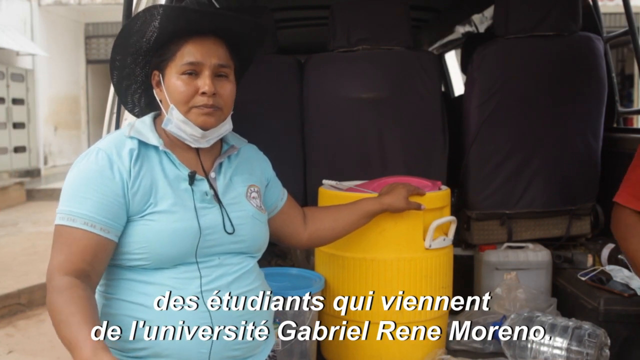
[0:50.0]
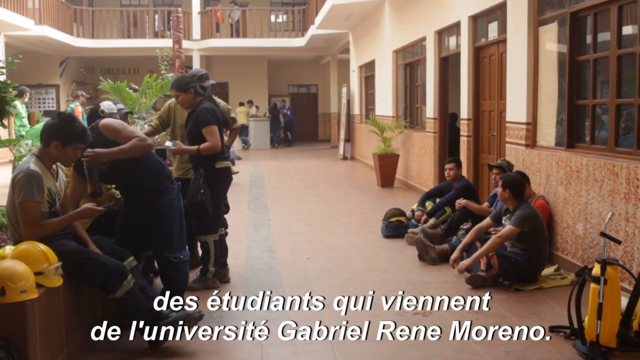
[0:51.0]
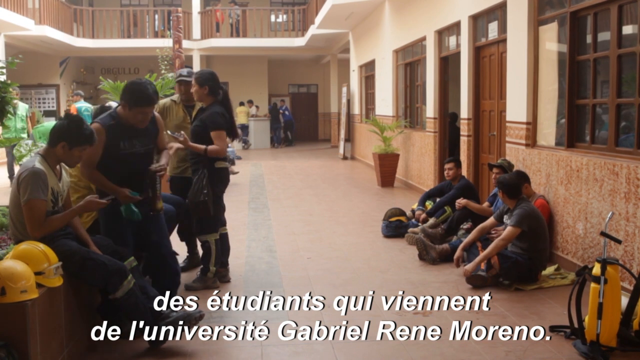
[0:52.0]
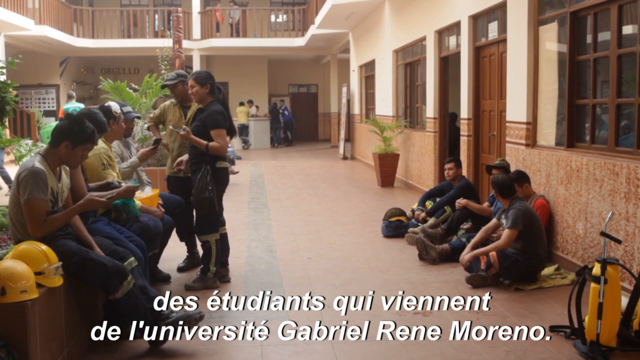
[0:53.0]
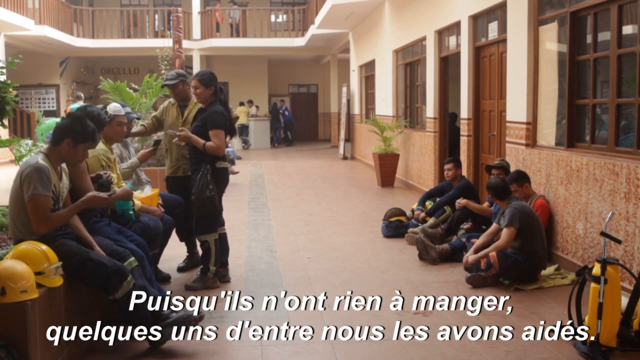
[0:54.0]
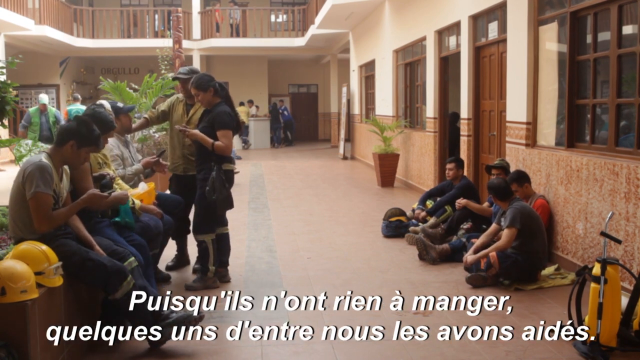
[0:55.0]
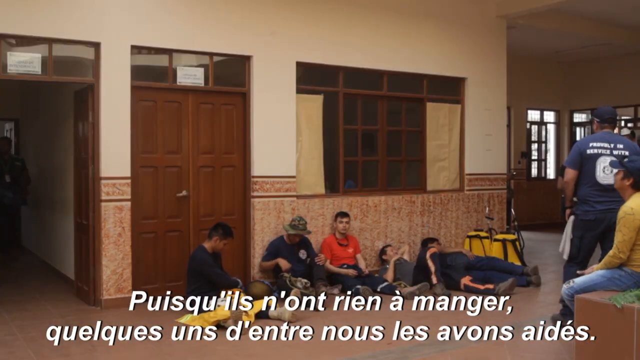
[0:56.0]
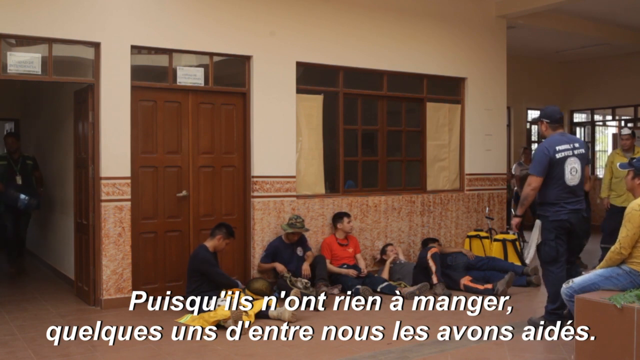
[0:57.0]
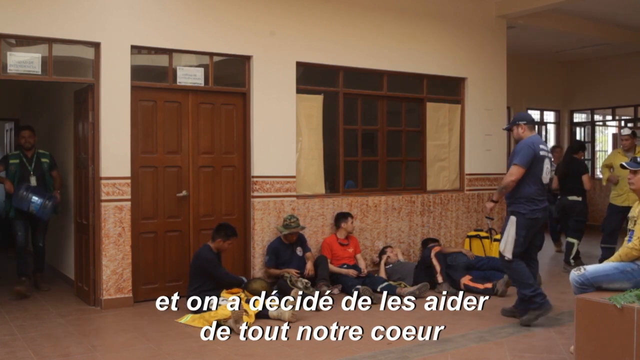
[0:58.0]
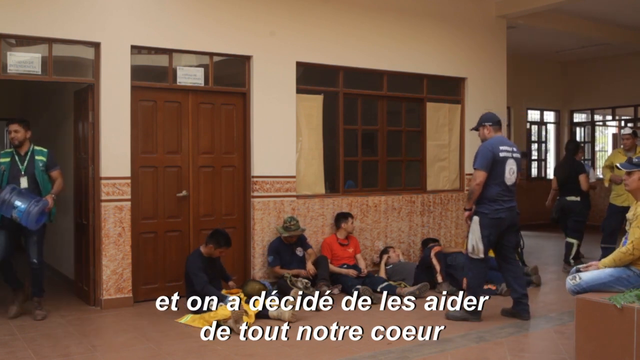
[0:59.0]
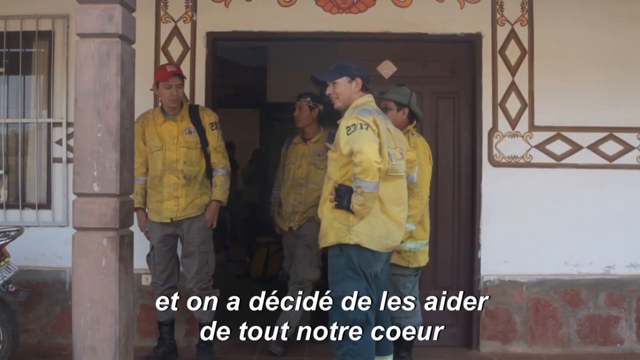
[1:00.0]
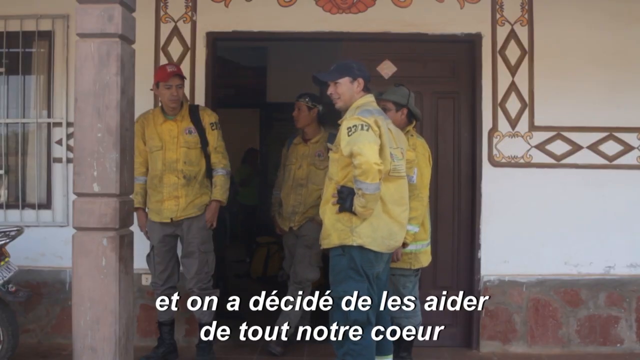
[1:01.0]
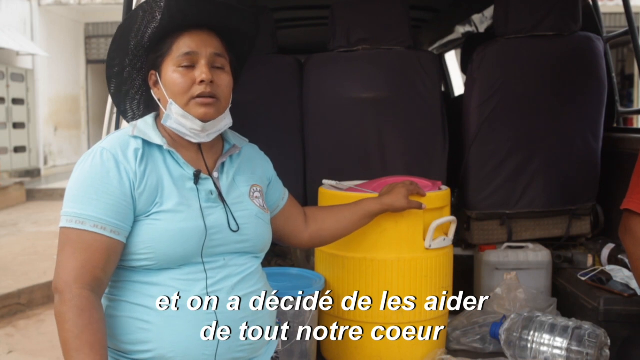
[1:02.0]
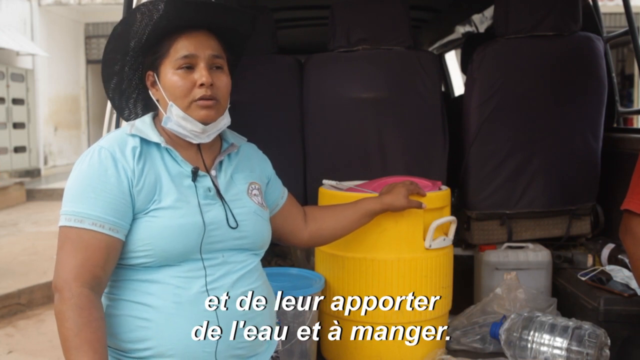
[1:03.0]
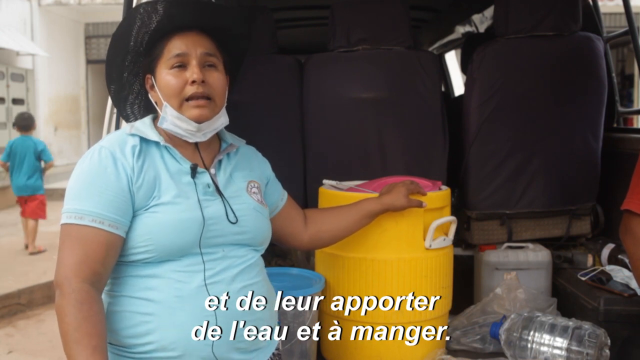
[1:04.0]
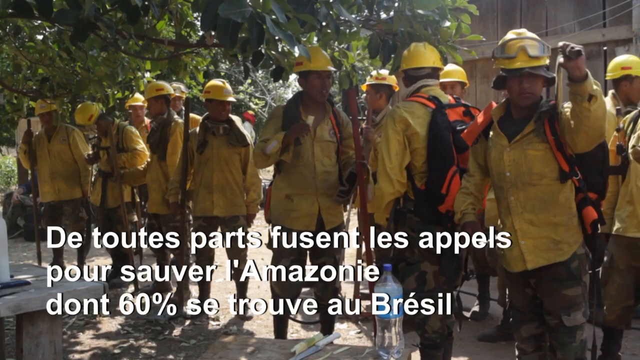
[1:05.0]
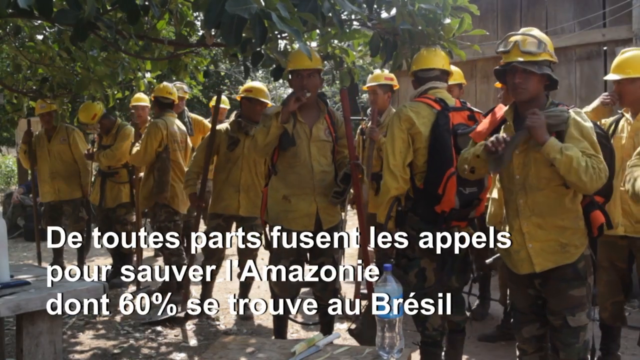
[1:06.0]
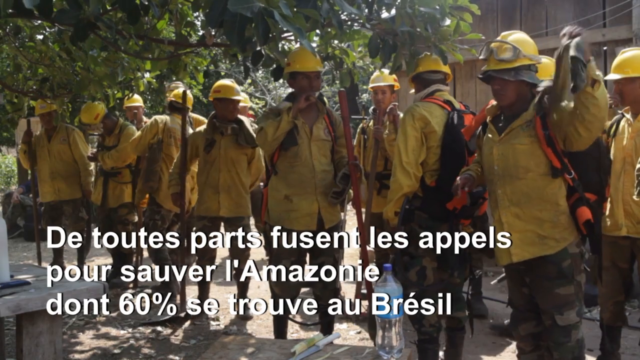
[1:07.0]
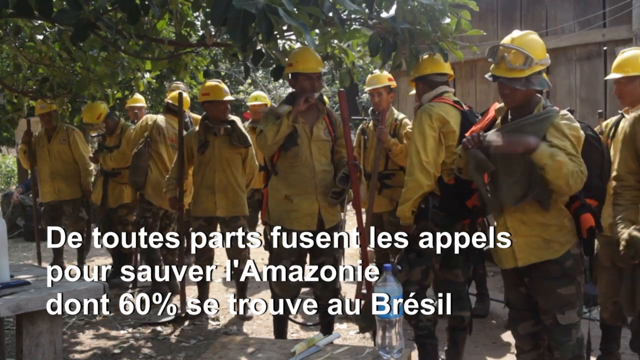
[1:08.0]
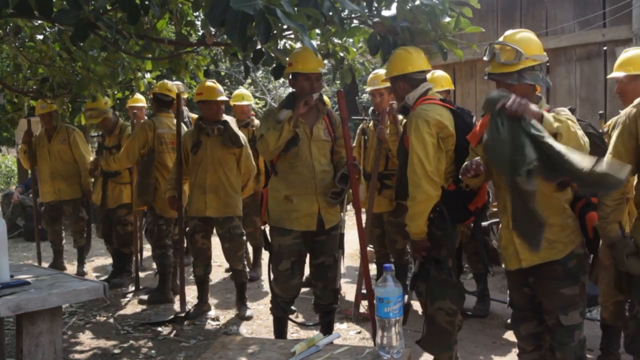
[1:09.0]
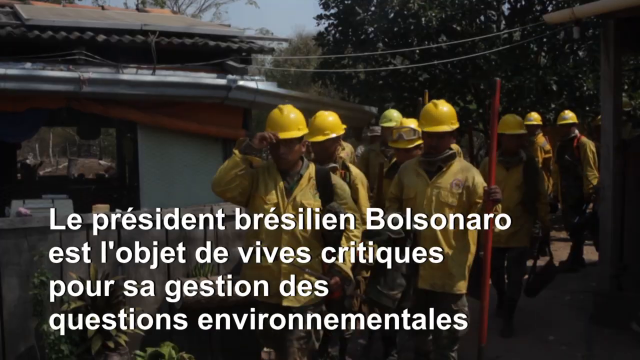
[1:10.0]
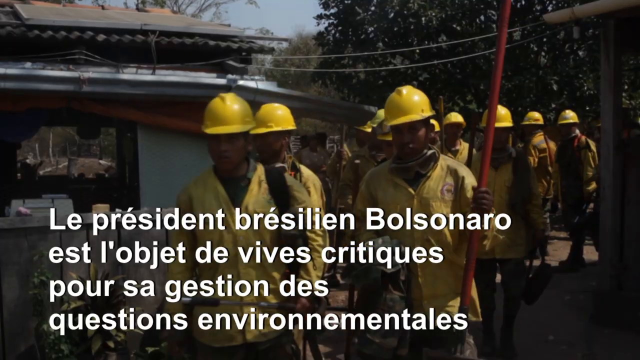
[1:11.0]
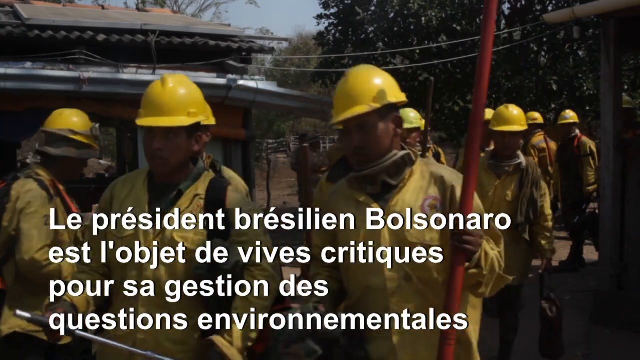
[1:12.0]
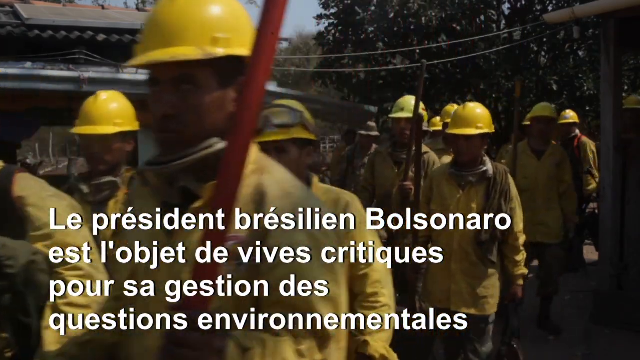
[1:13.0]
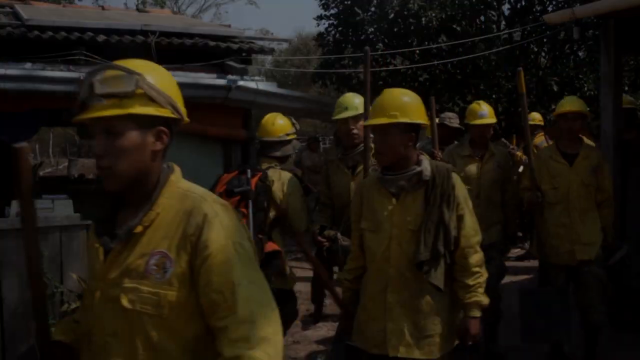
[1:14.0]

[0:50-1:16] Sylvia is being interviewed. The video then cuts to a group of people in the building where the water jugs were. Four younger adults sit against the wall by a door, and a backpack is on the ground. Across from them are about six adults. Four, who appear to be males, sit next to each other; some are talking while others look like they are looking at a phone. The man on the right-hand side has two yellow hats next to him, wears a short-sleeved shirt, and looks like he has fire retardant pants on. A woman and a man in a hat stand talking to these men. The woman looks like she also wears the same pants, as do two of the seated men, suggesting they may be rescue workers or firefighters. Next, five men are against the wall: two lie down, two sit against the wall, and one sits in front of the door, not pushed up against anything. They talk to another man wearing a blue shirt, a blue hat and black pants, with a white towel hanging out of his left-hand pocket. A shot follows of four men in identical yellow shirts with numbers on the left shoulder sleeve; three of the four wear hats. They stand in front of the doorway of what is probably that building, talking. The video cuts back to the woman who was interviewed earlier, and then shows a group of probably at least ten men, all in yellow shirts and yellow hats. One has an orange and black backpack, and they all hold wooden things that look like some kind of tool. Outside, they walk in a group toward somewhere with the tools in their right hands.